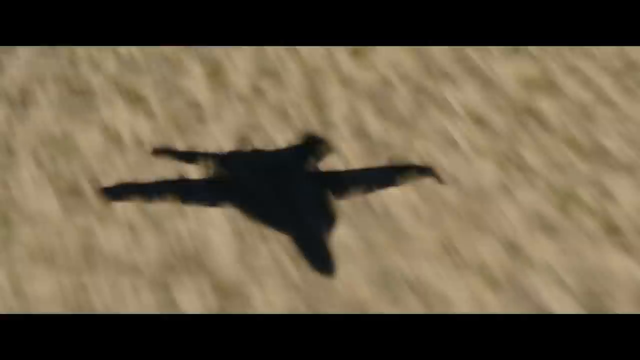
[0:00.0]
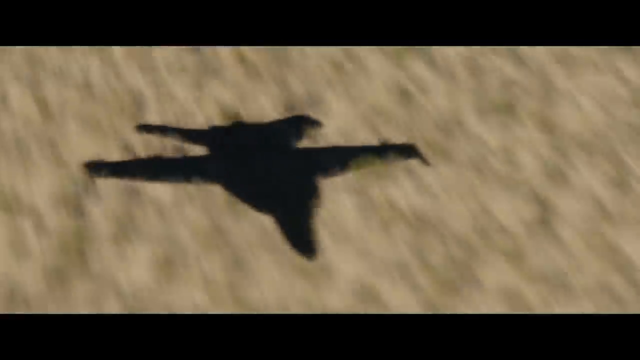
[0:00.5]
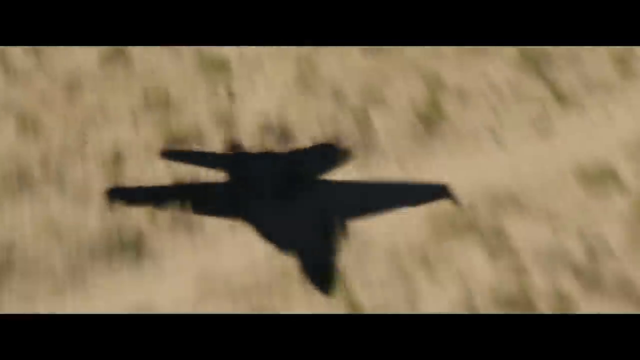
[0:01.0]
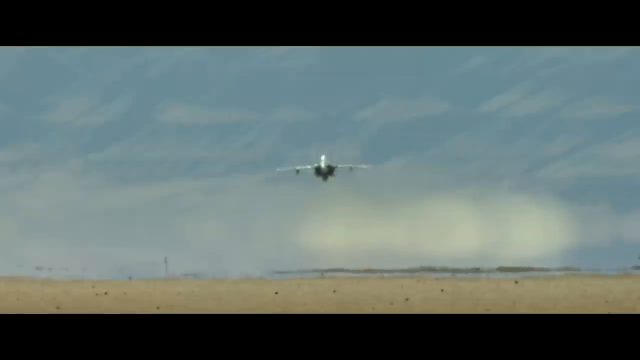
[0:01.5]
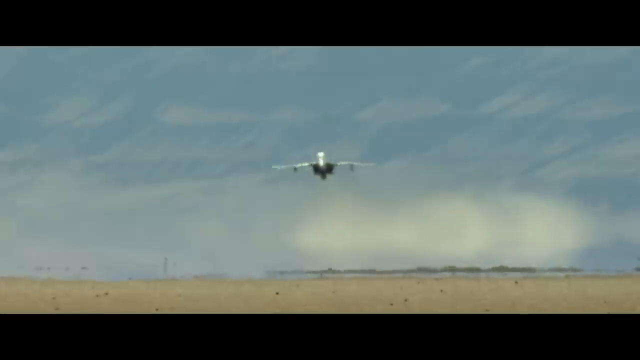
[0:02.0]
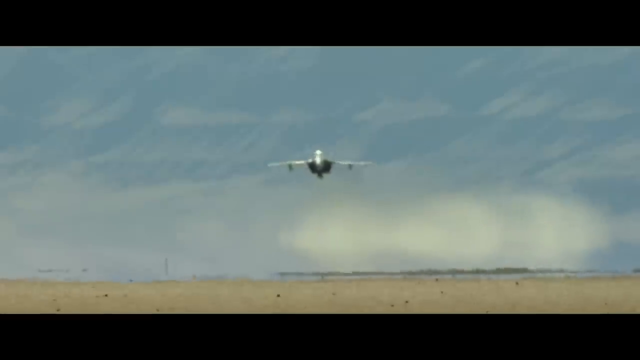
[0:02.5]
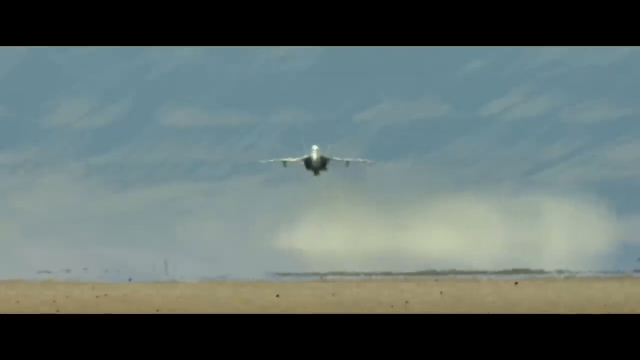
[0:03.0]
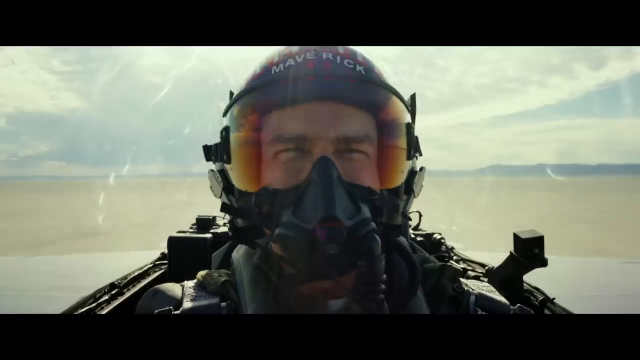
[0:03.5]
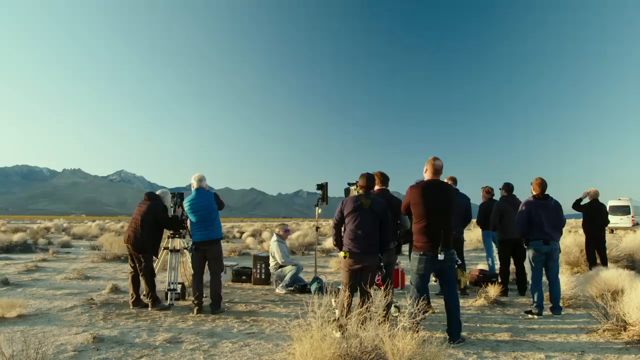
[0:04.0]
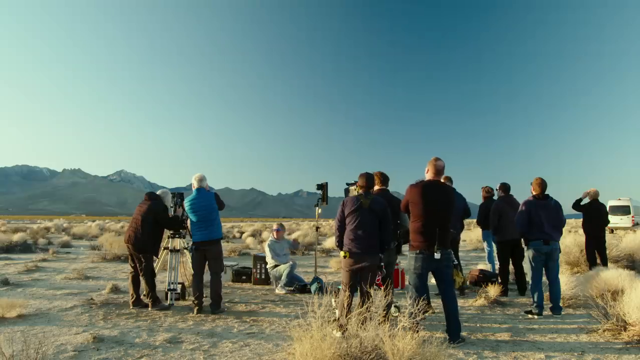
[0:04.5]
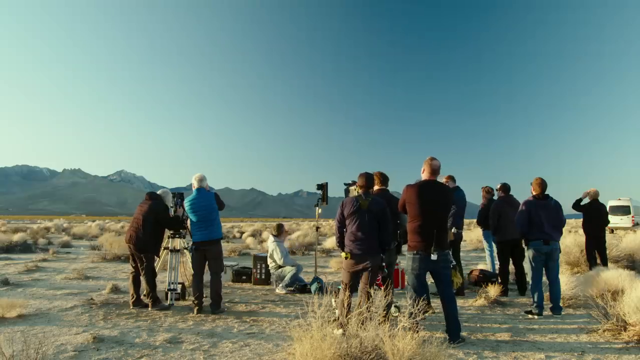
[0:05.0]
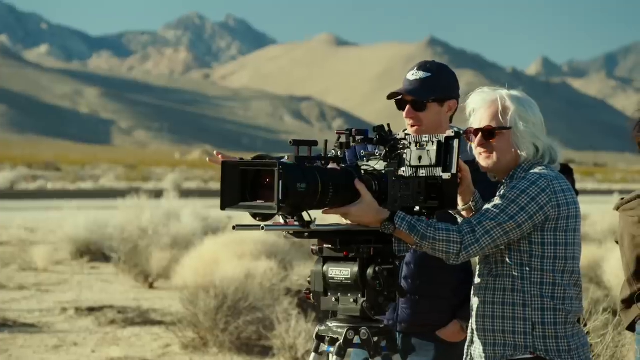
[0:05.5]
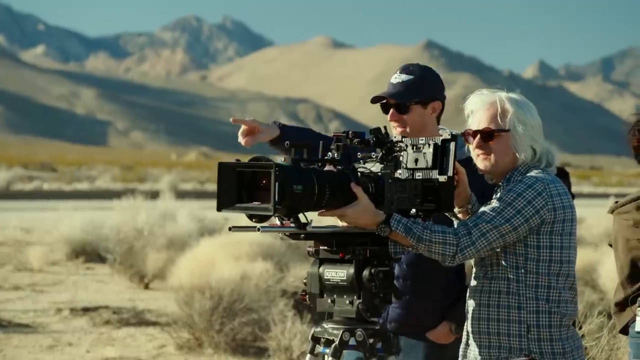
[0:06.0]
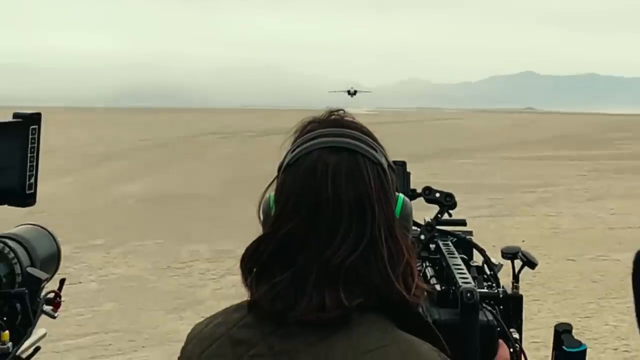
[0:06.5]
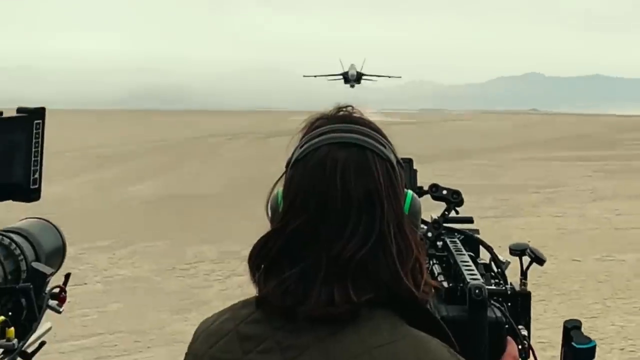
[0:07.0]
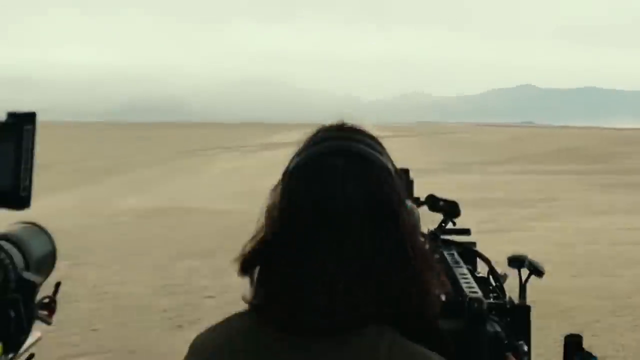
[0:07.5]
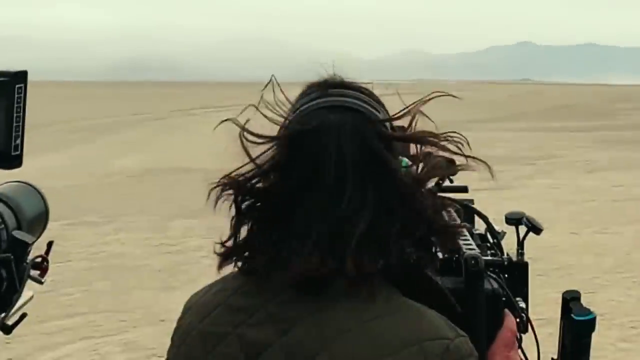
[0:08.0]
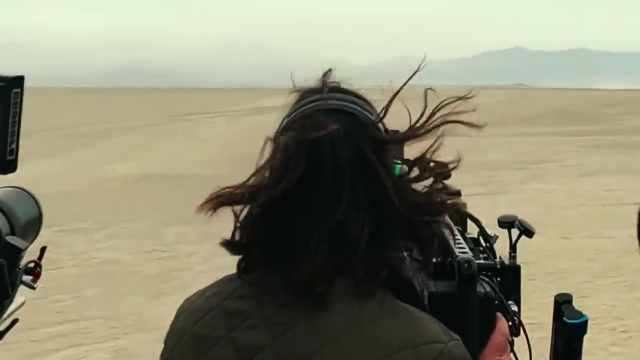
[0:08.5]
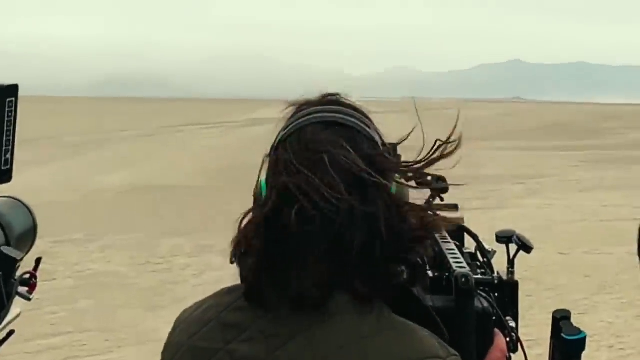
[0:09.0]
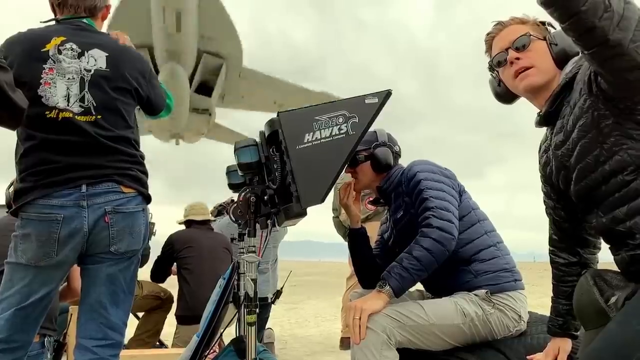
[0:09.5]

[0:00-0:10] A man who looks to be in his mid-thirties wears a black mask on his face. He is flying above a group of people in an aeroplane, piloting it up there while they look up at him and watch. The onlookers, more than three of them, look to be in their mid-thirties and wear black clothes. They have cameras pointed at him and take pictures of him. The setting does not change; the man keeps flying the aeroplane while the people watch. No text is visible.